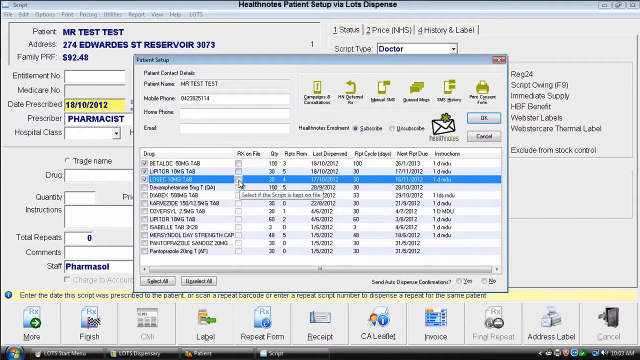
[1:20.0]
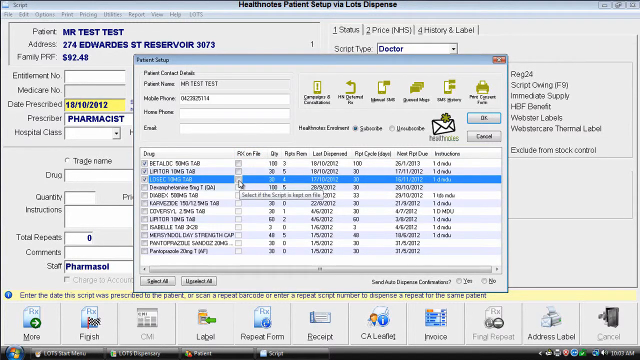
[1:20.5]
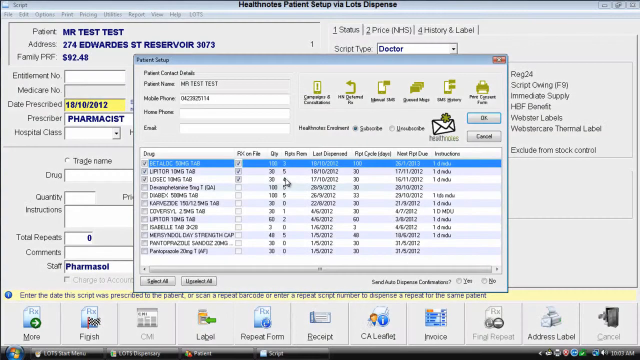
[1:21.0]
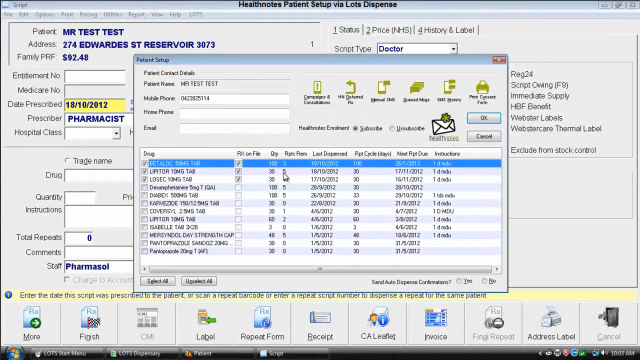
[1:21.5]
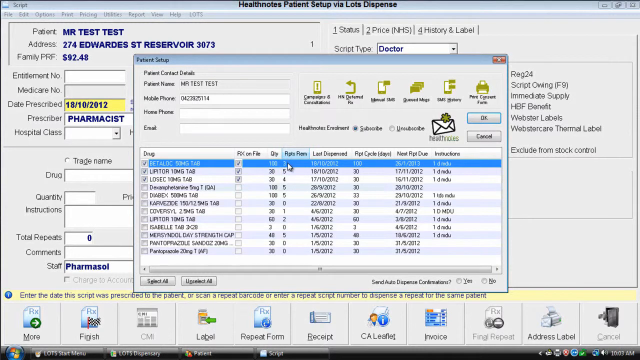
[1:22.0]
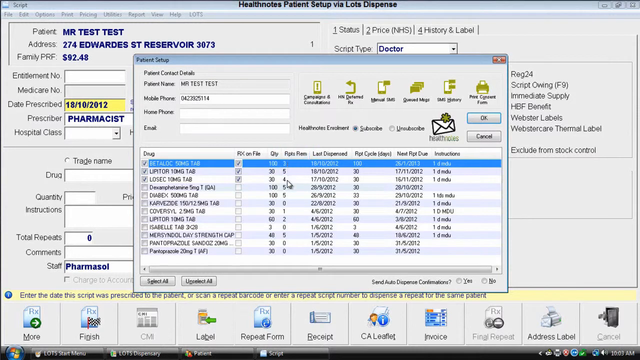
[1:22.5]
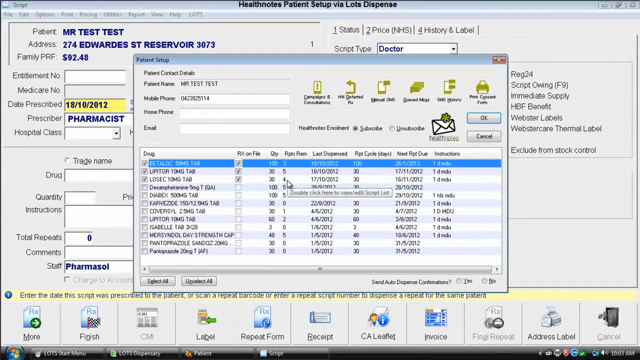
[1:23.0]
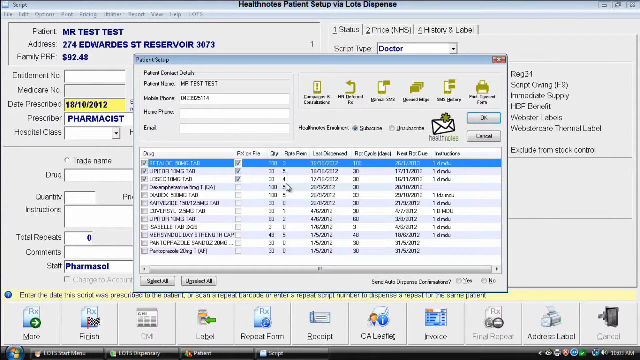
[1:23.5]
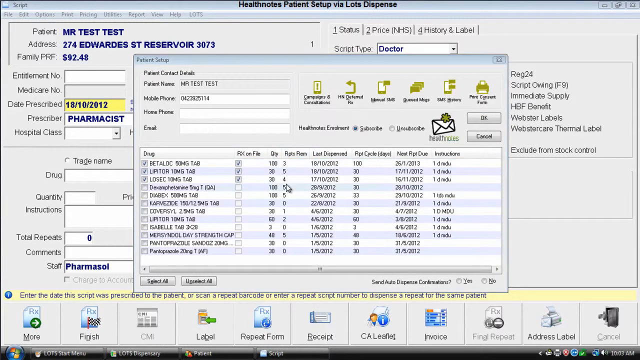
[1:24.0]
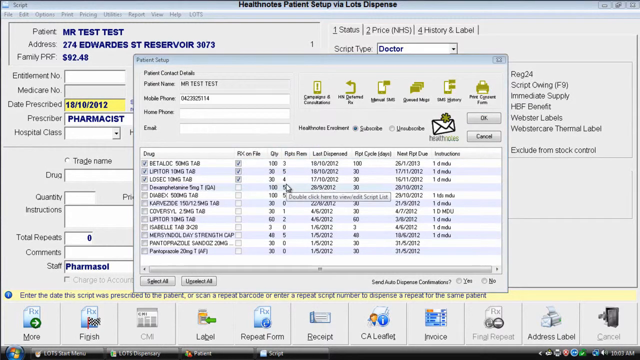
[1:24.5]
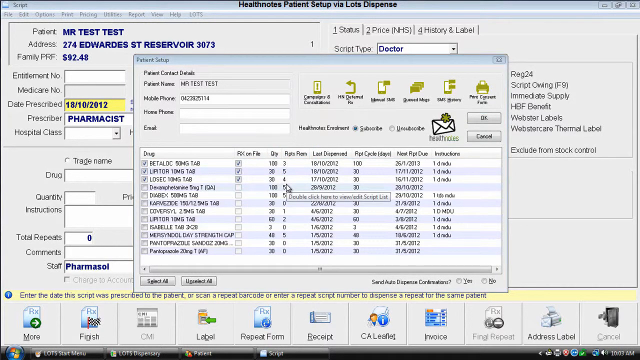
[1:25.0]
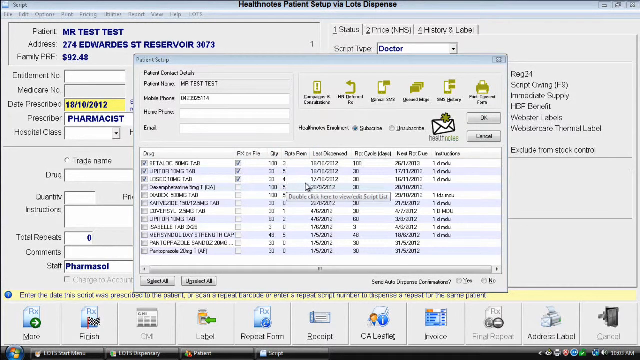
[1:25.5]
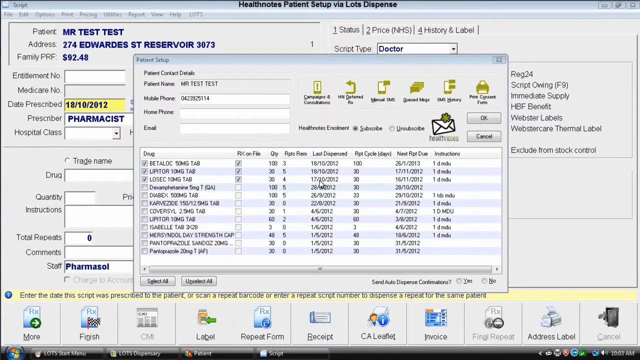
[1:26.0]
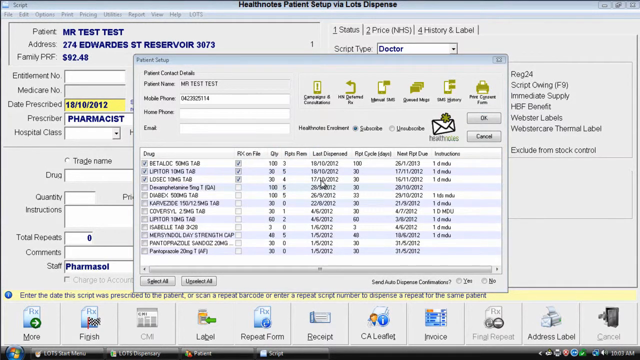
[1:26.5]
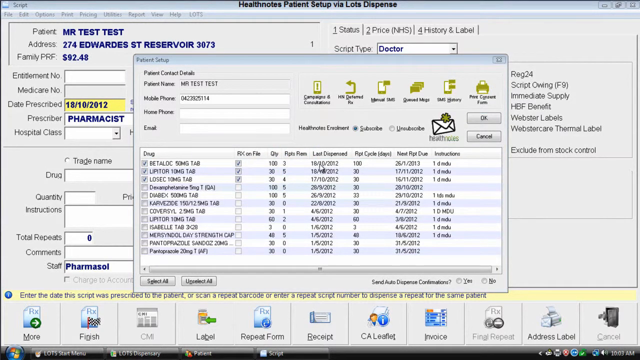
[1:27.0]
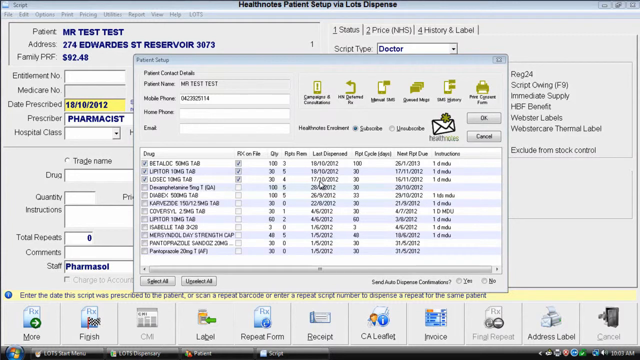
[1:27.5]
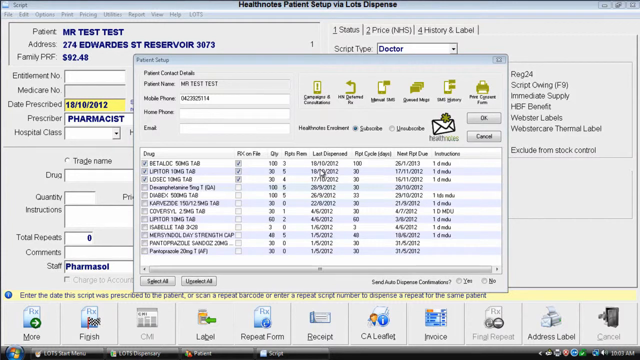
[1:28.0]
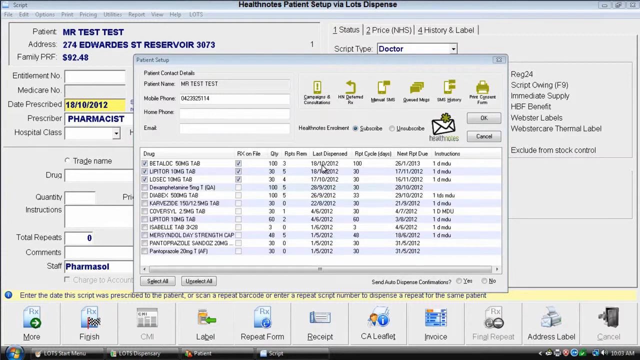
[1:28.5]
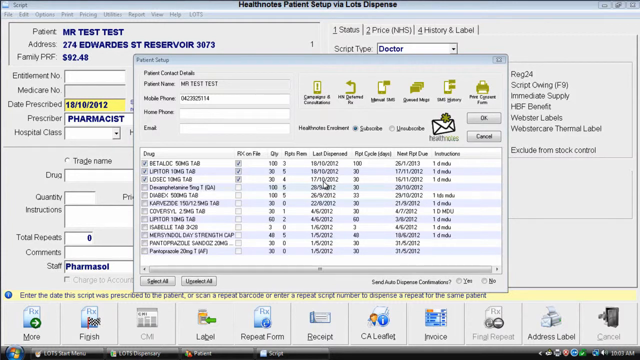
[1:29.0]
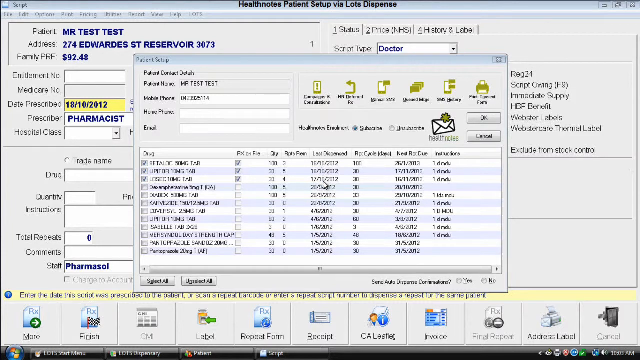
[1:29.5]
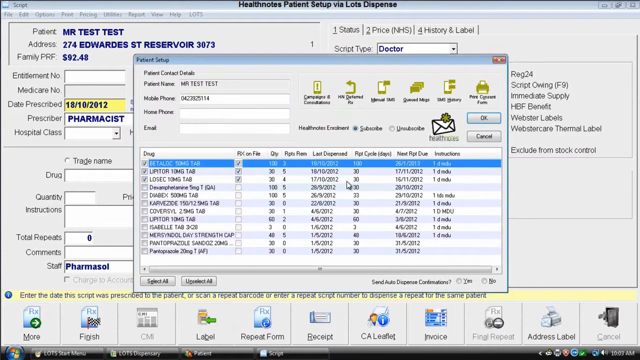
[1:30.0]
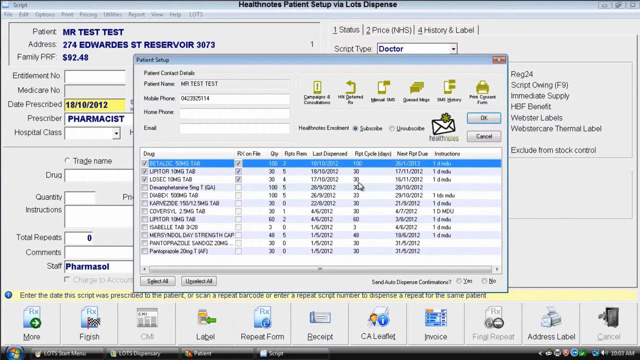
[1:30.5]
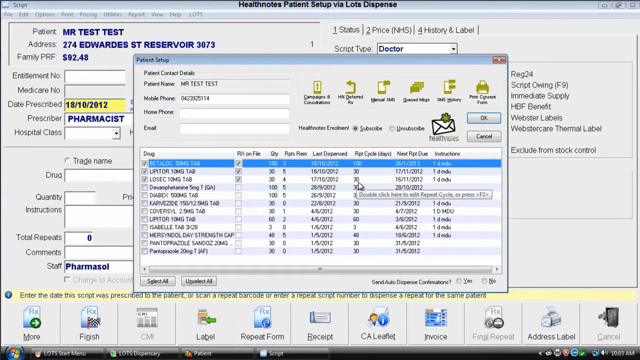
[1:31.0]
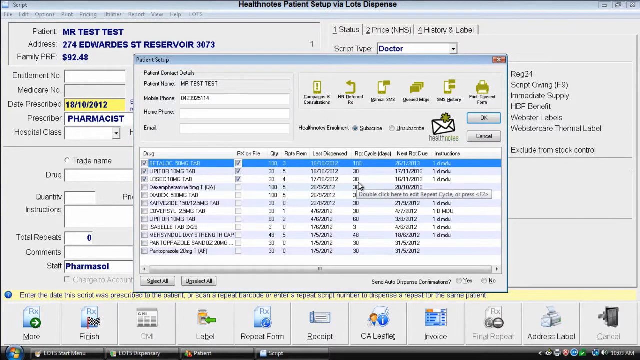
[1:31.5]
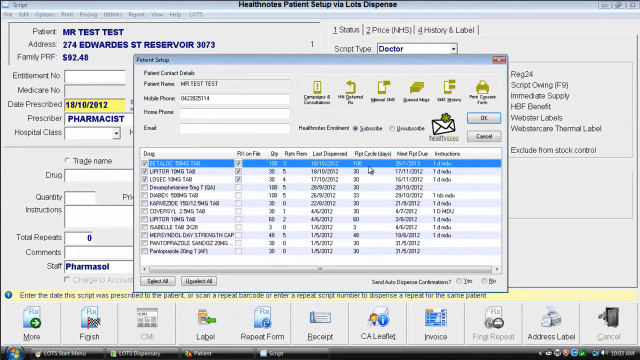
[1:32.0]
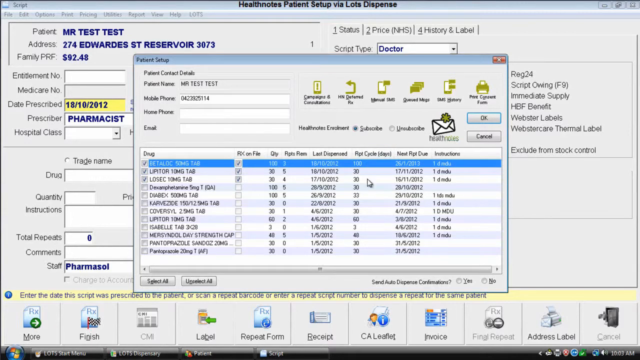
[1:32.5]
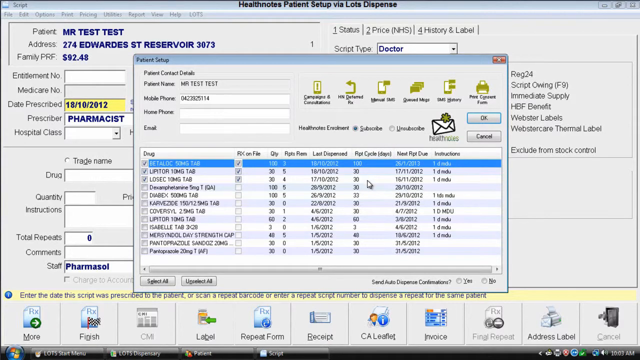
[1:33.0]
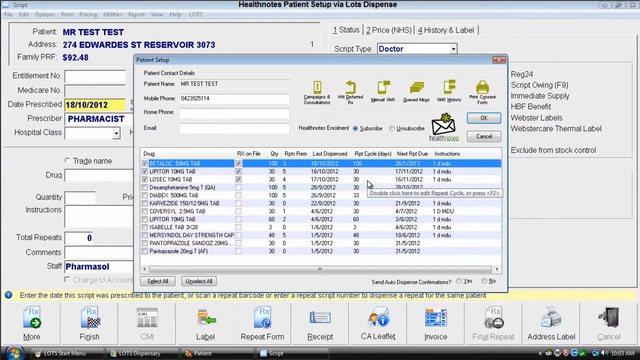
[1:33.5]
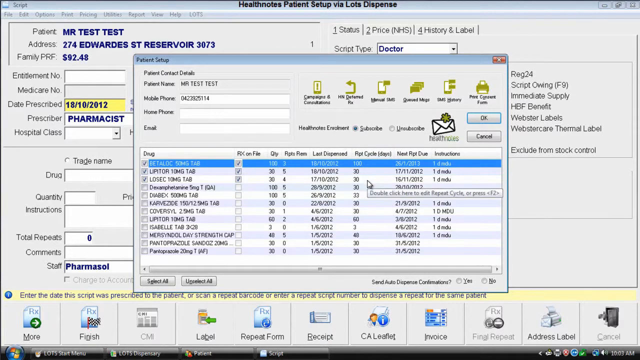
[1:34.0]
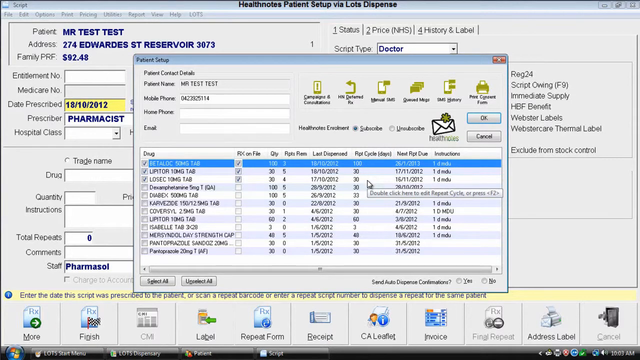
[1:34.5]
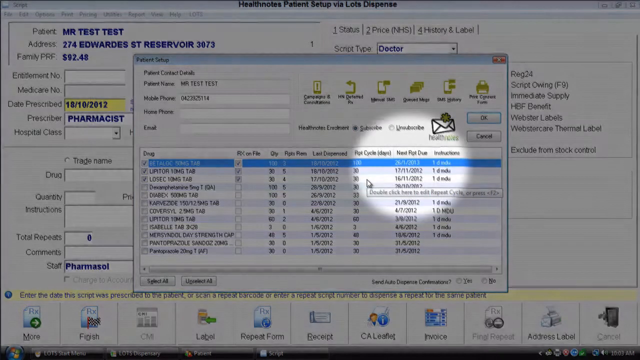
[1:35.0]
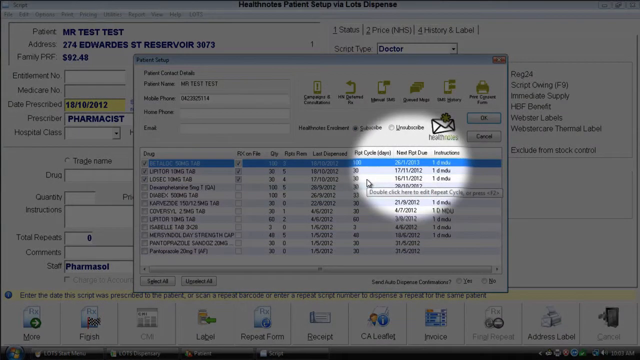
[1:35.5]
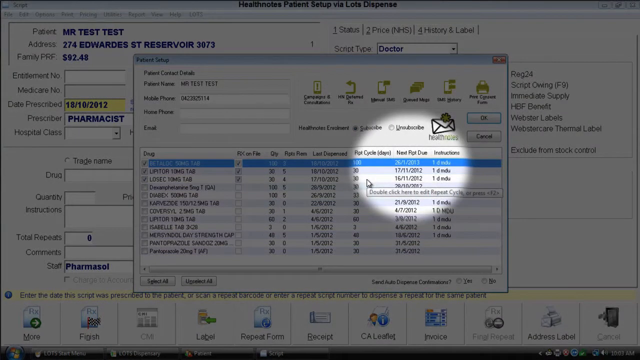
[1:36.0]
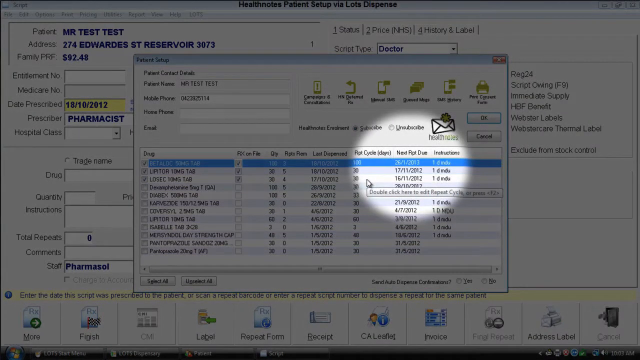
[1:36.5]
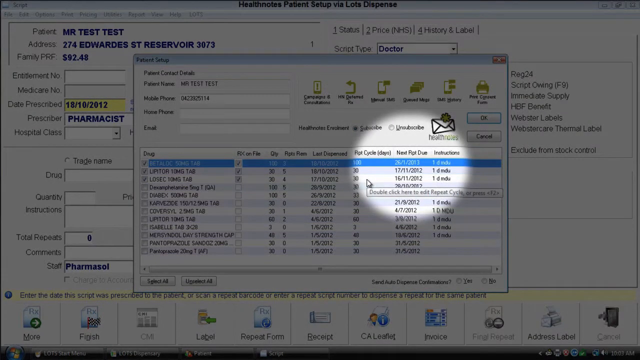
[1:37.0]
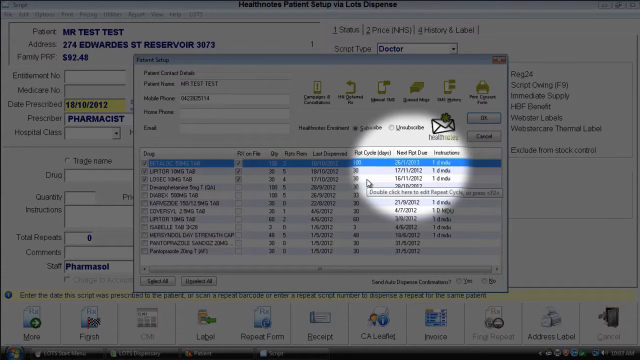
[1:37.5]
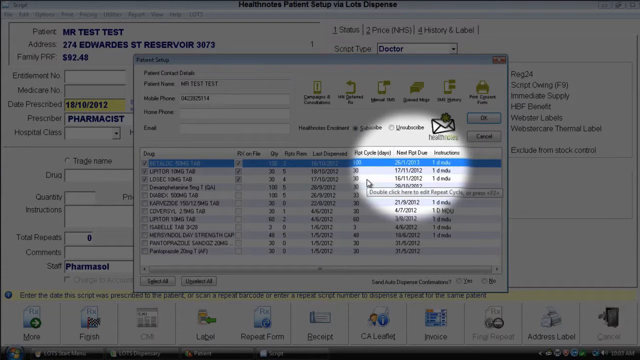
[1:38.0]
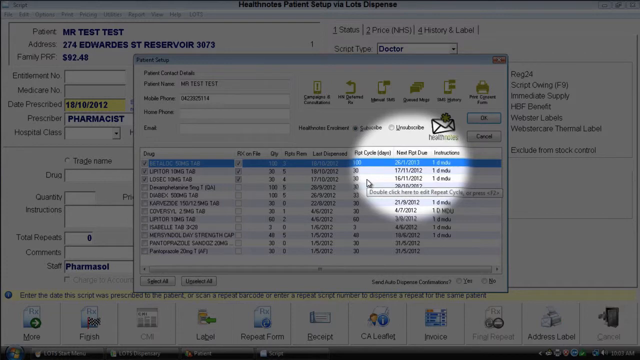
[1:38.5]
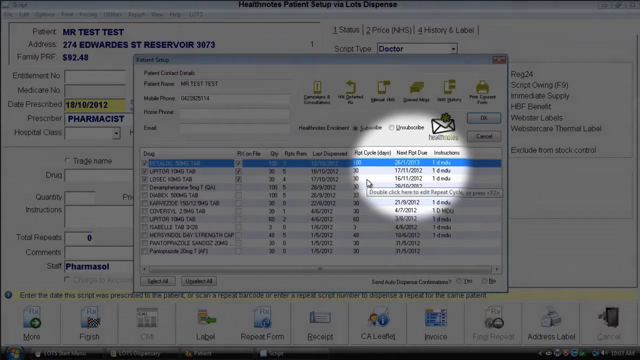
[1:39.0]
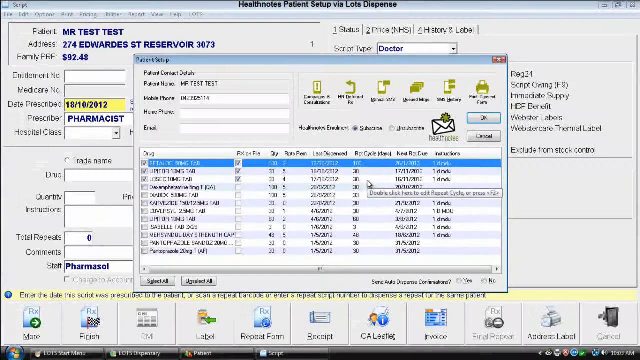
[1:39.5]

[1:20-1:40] The screen seems to change, and all three checkboxes are checked again, both on the left side of the drug names and on the right side under the column "RX on file." The user seems to hover over the different information given about each drug, such as the quantity, the date it was last dispensed, the cycle, and instructions. When the cursor hovers over the numbers in the RPT cycle, a little pop-up shows that says "double-click here to edit Rpt cycle or press F2." Then a kind of spotlight hones in on the next RPT due column, which shows dates for the next schedule: January 26, 2013 first, then November 17, 2012 underneath, then November 16, 2012 underneath that.